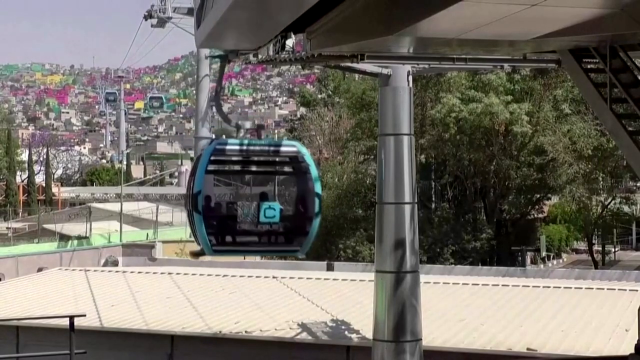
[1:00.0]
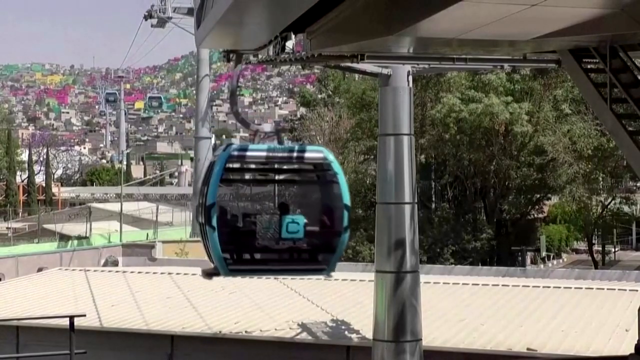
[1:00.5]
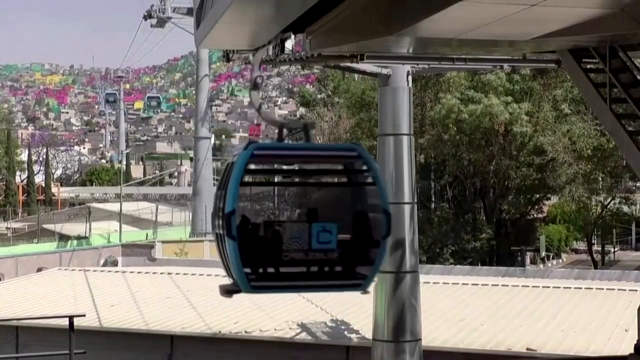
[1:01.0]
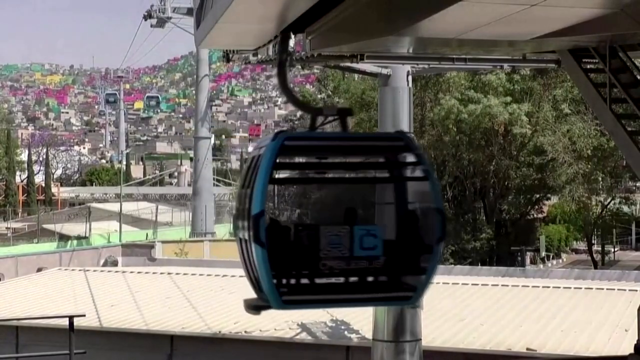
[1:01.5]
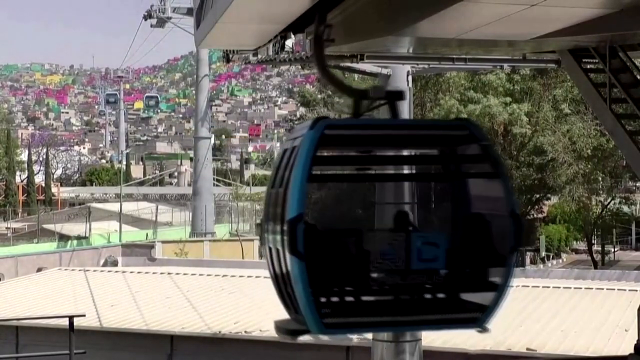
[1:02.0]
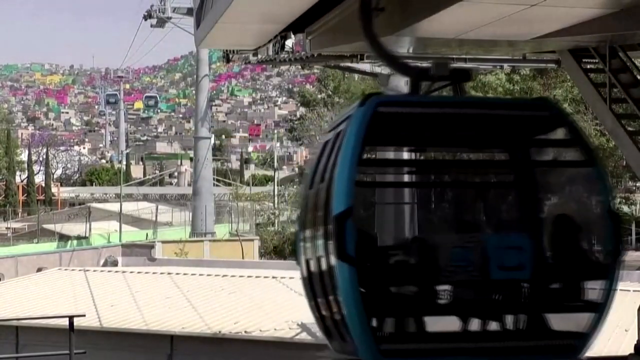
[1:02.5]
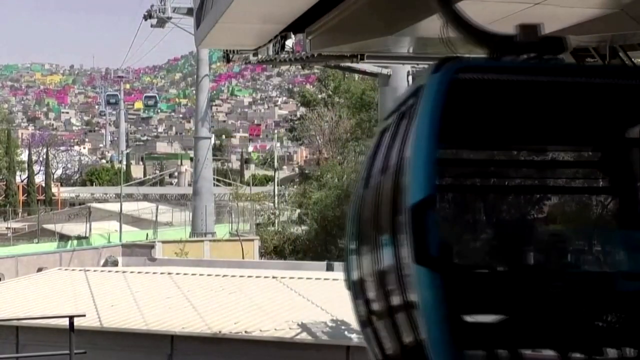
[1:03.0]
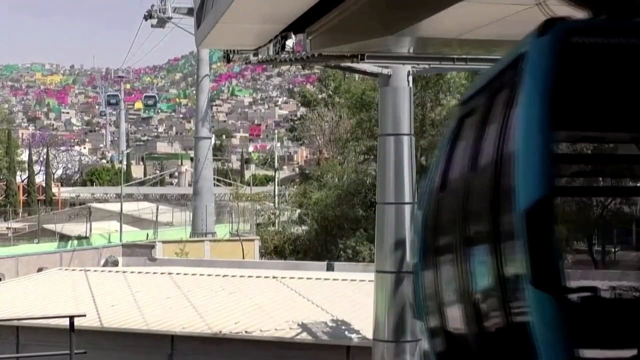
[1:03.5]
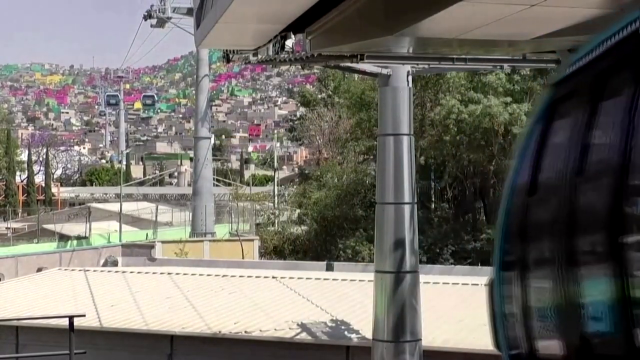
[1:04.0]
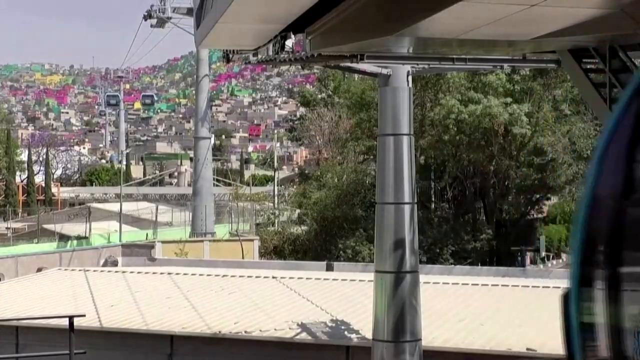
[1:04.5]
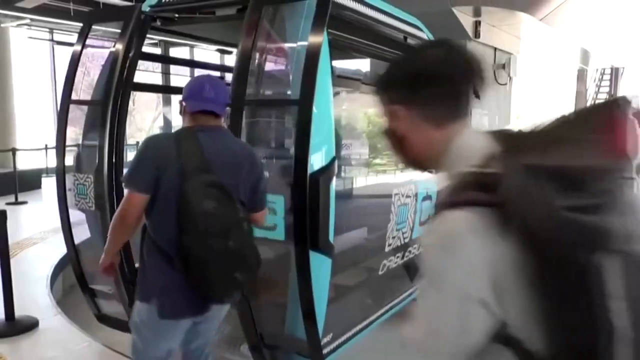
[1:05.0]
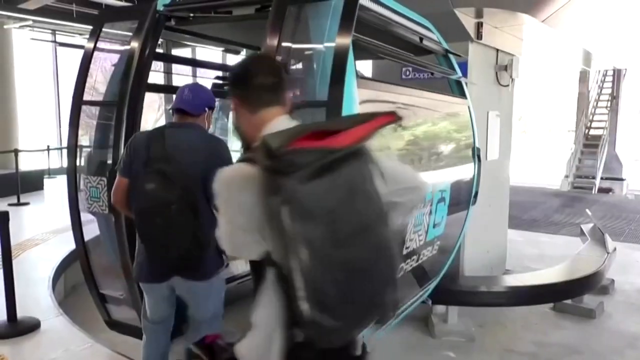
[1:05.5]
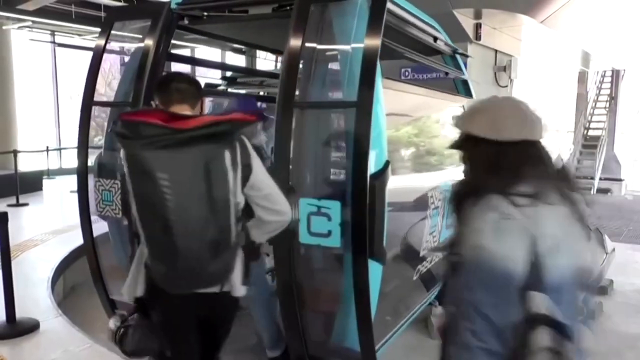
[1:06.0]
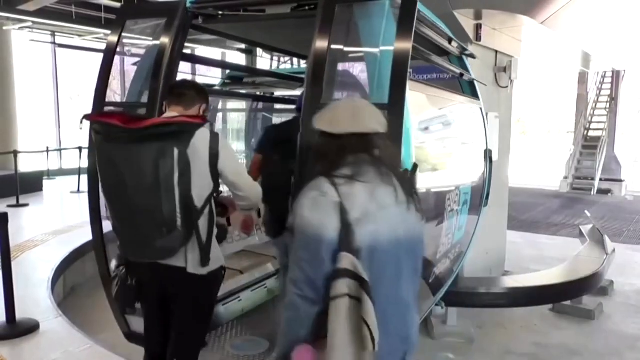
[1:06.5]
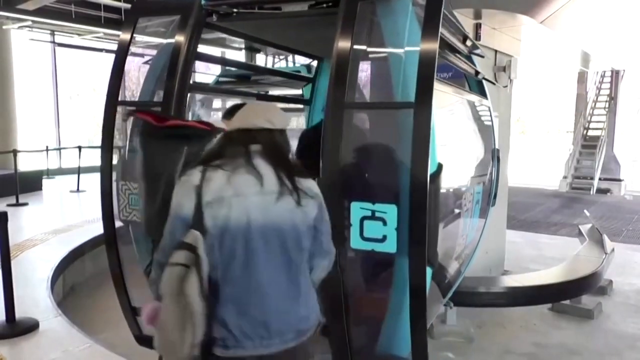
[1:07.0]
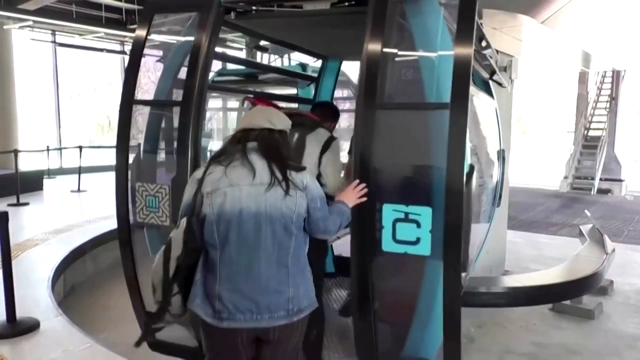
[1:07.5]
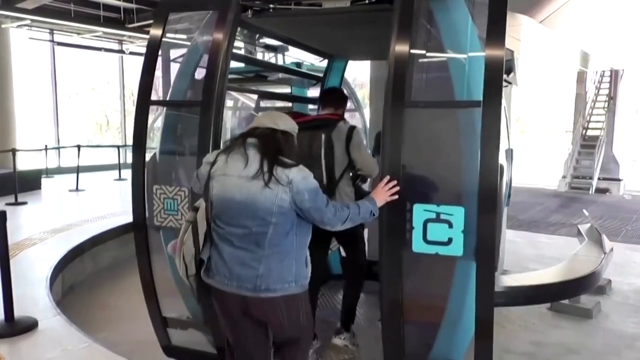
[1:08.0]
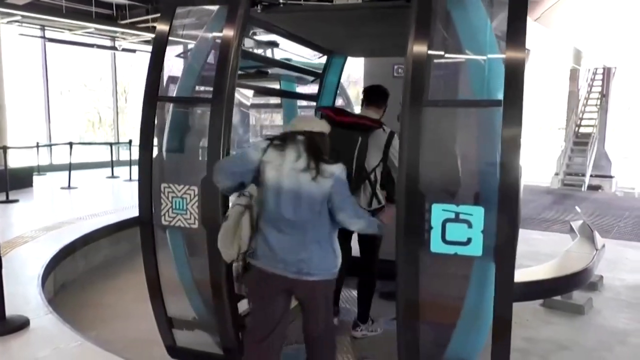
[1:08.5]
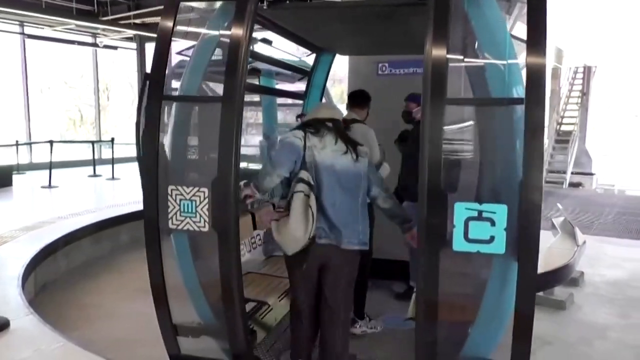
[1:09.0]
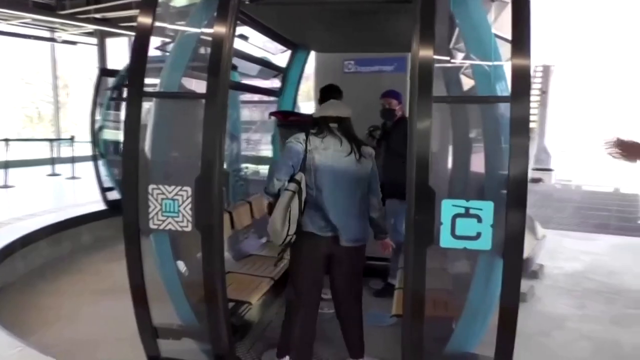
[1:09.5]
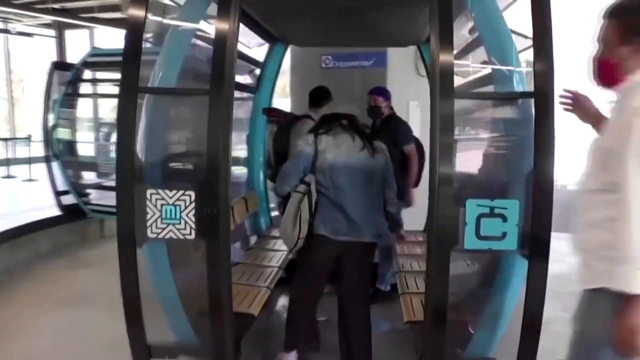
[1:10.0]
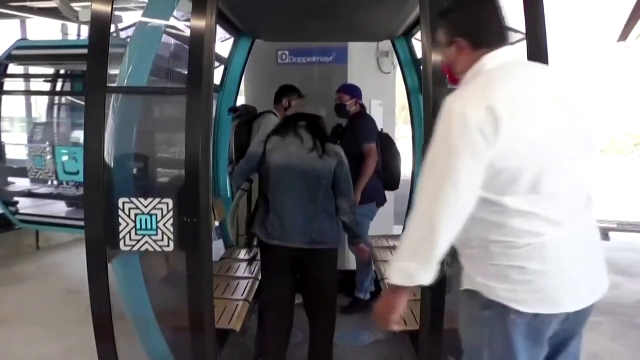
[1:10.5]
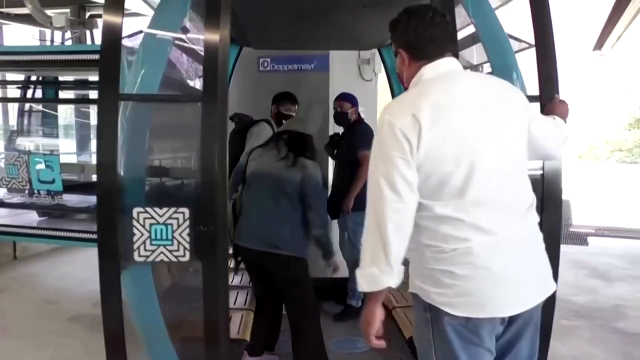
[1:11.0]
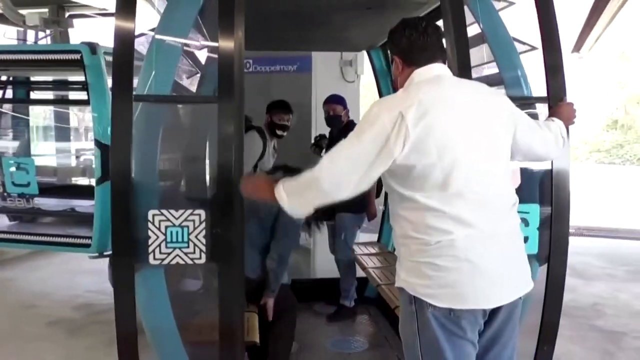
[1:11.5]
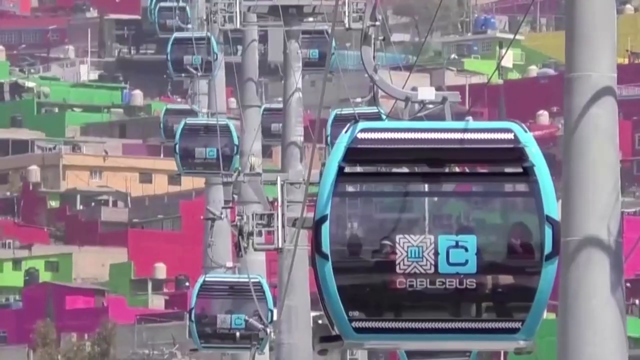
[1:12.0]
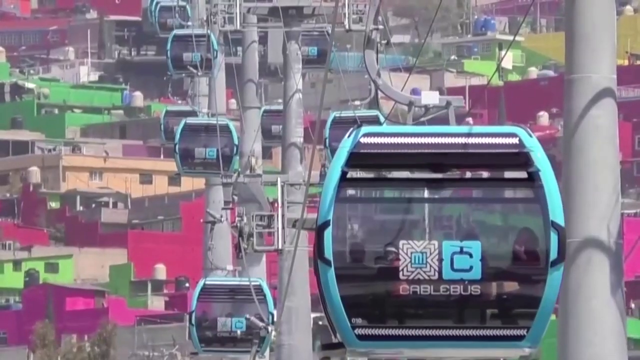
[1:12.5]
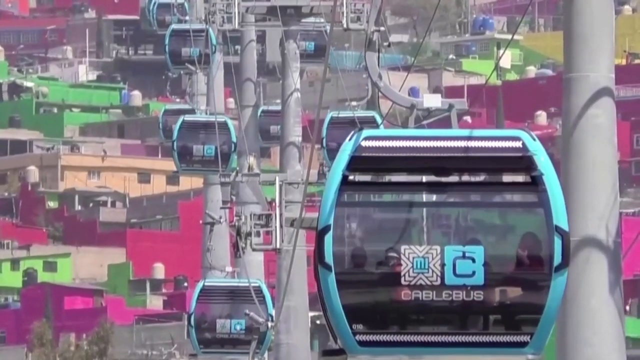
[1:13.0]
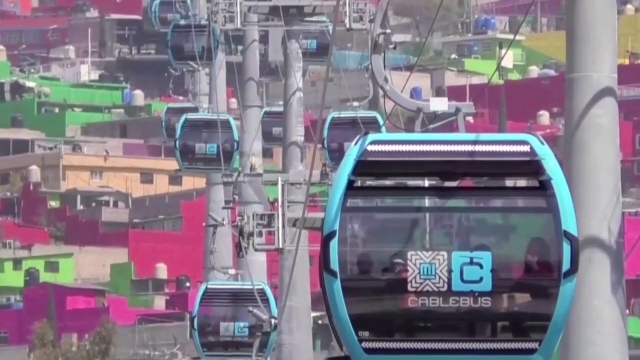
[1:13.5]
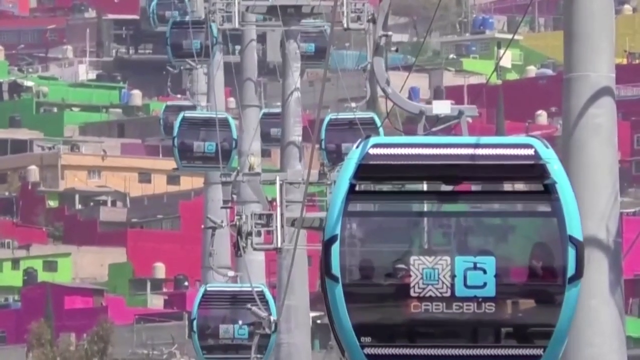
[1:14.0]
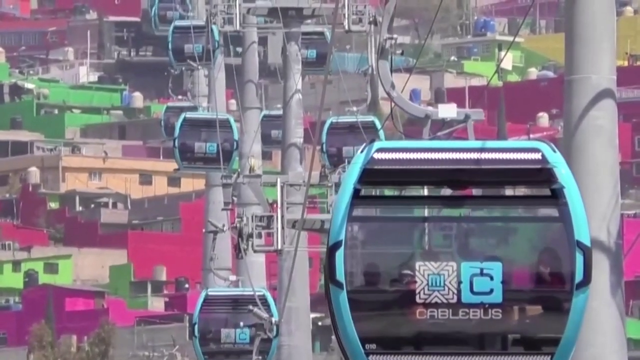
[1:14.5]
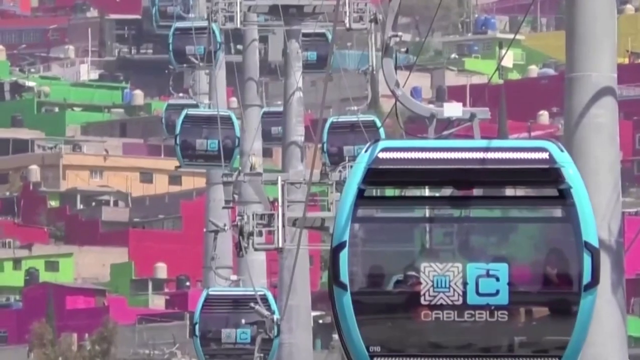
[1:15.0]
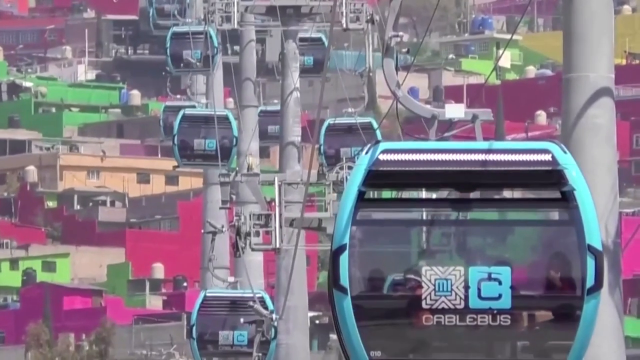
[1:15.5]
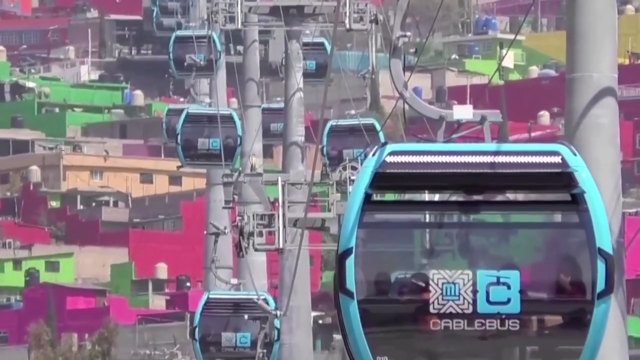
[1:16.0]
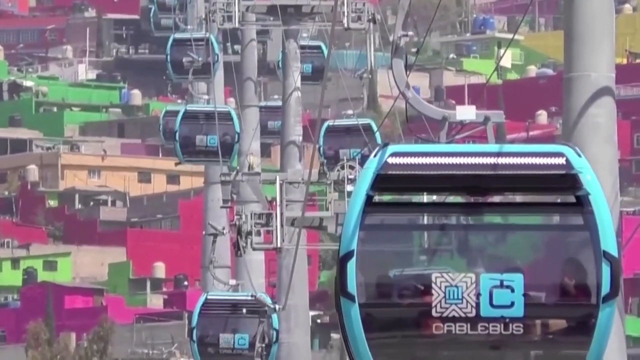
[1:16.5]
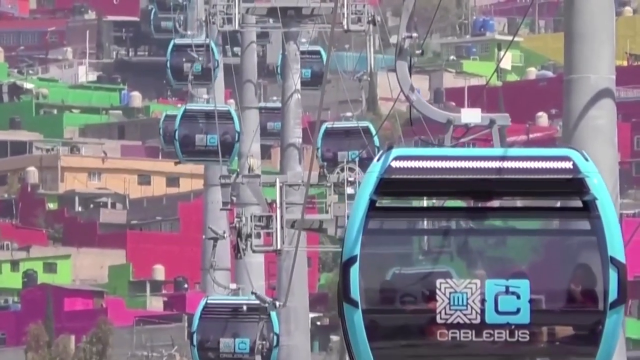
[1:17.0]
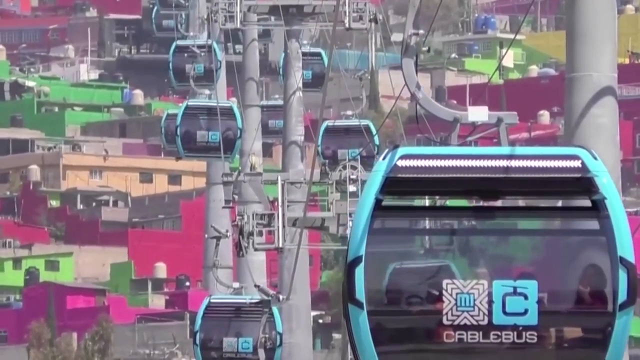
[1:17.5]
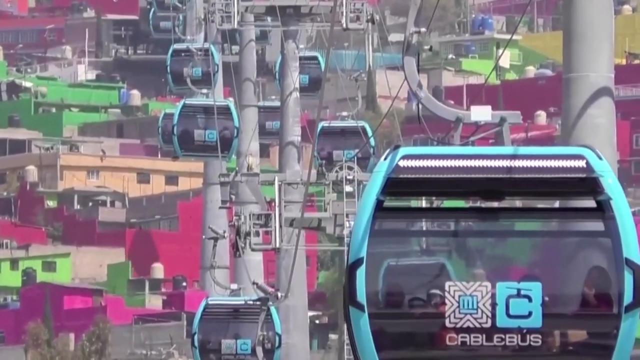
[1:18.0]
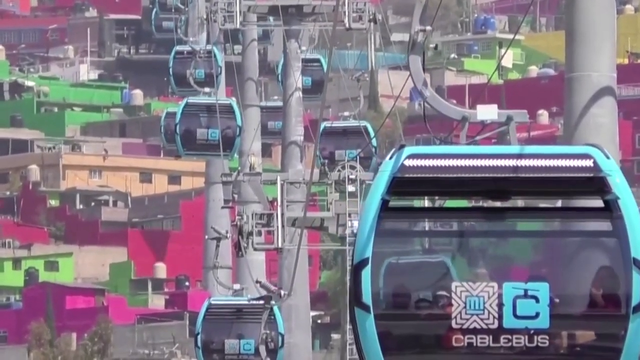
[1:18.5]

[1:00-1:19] A blue cable car with people on it comes down a wire, coming close to the camera, with buildings in various colors, including green, yellow and pink, in the distance. The scene transitions to two people getting onto a cable car, and then another person comes into view: two men and one woman in total. A man in a white long-sleeved dress top walks over and seems to talk to them. Next, a large number of cable cars come down the wire with people on them, above a lot of vibrant green, pink and red buildings. The location looks like it may be Mexico or a similar place.